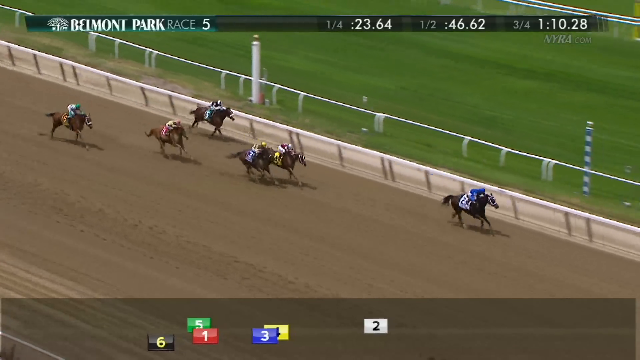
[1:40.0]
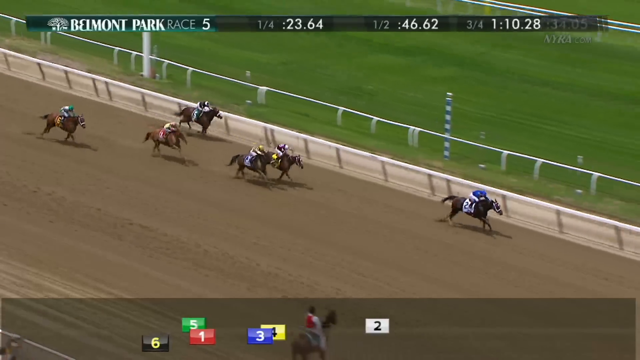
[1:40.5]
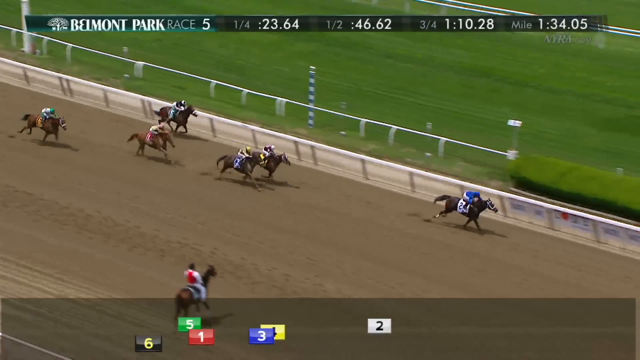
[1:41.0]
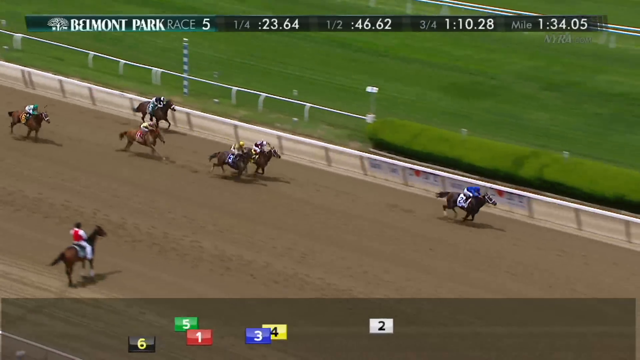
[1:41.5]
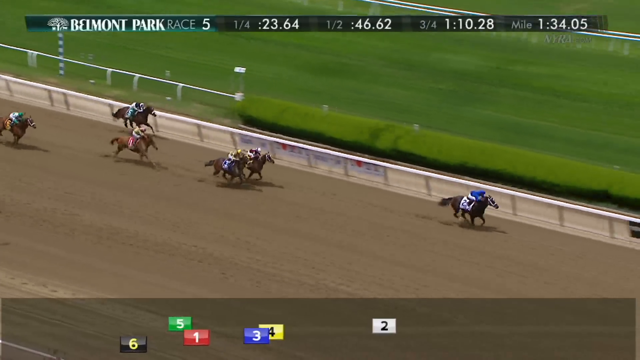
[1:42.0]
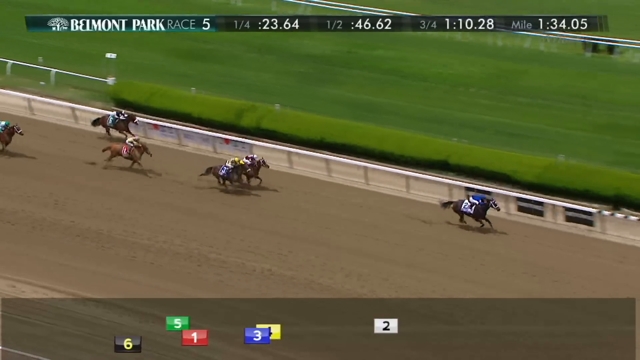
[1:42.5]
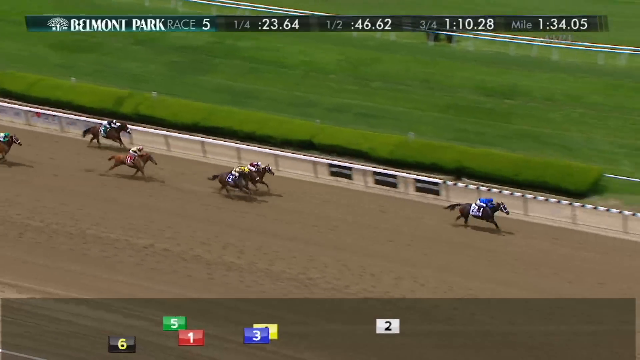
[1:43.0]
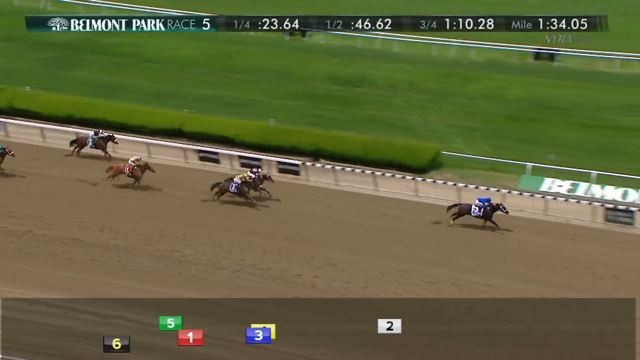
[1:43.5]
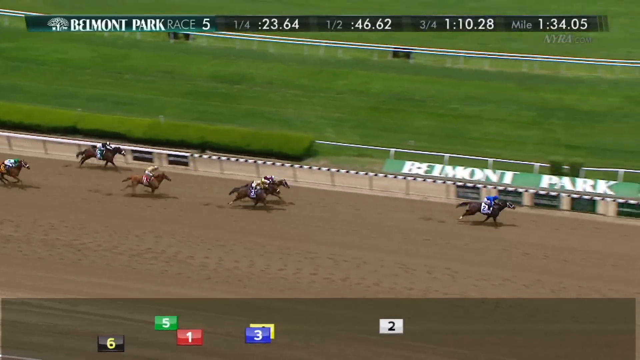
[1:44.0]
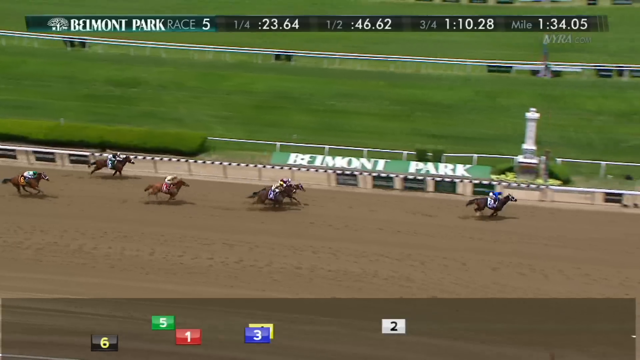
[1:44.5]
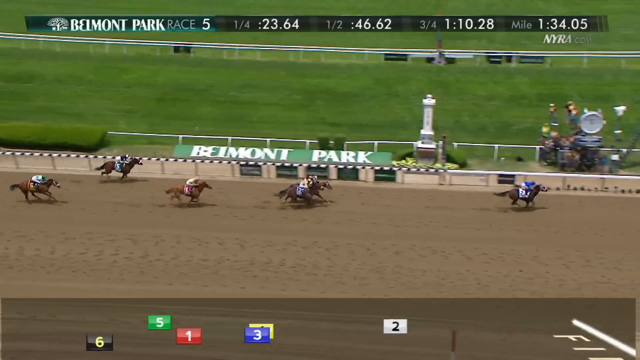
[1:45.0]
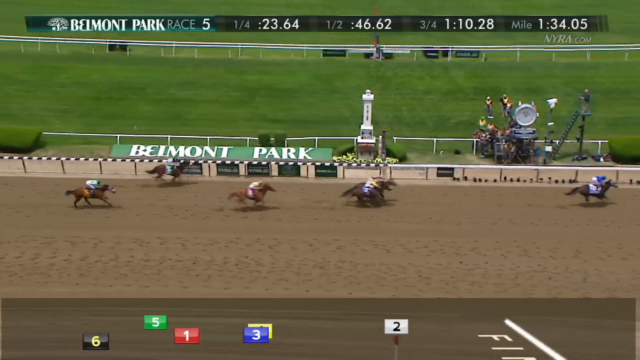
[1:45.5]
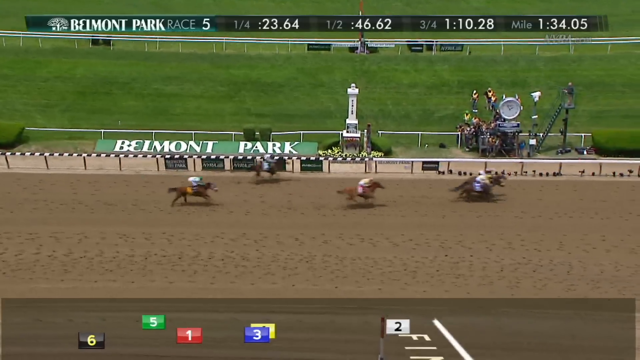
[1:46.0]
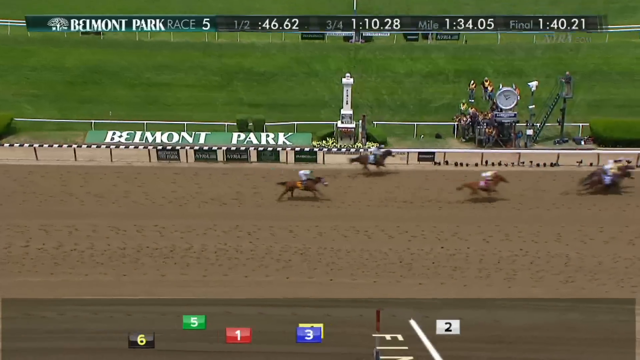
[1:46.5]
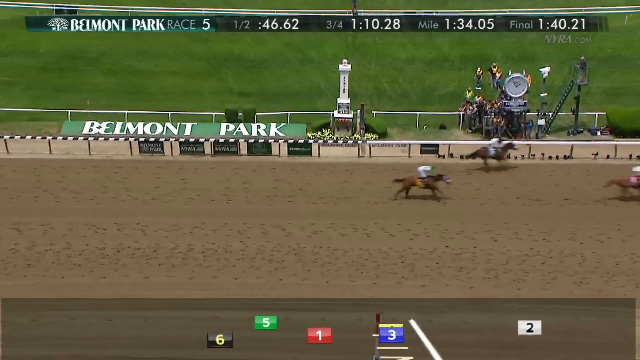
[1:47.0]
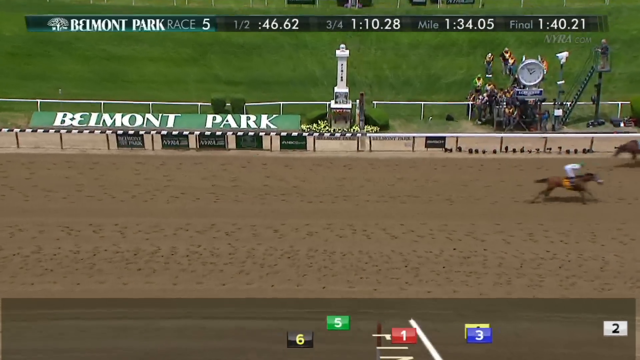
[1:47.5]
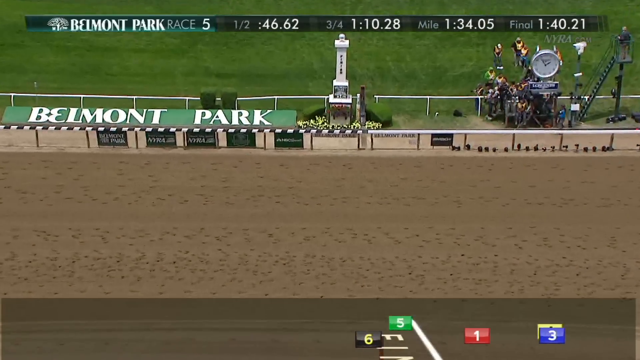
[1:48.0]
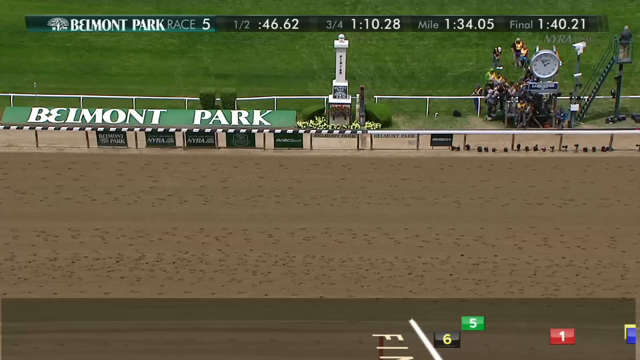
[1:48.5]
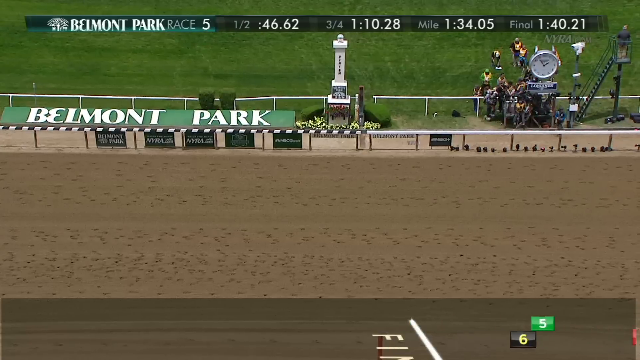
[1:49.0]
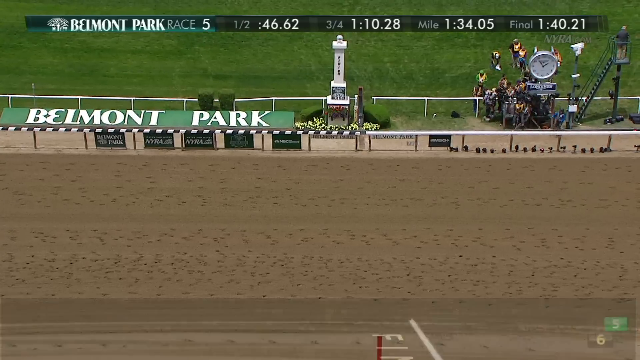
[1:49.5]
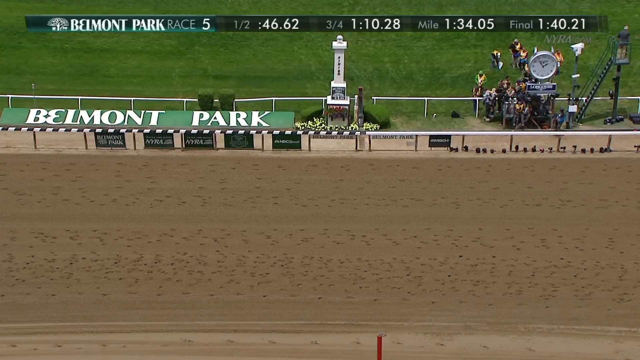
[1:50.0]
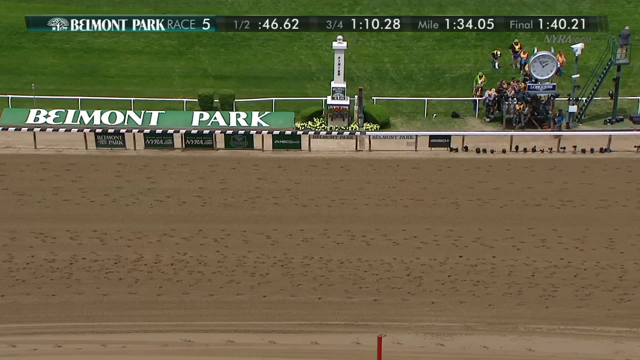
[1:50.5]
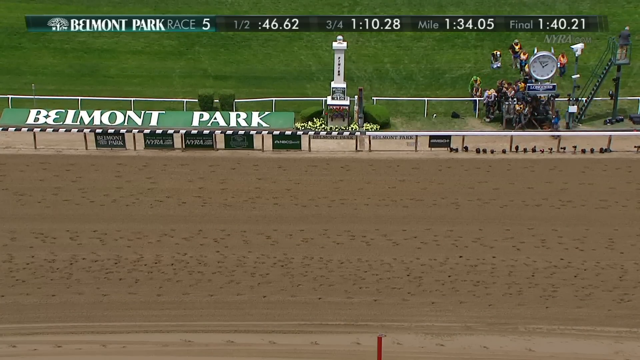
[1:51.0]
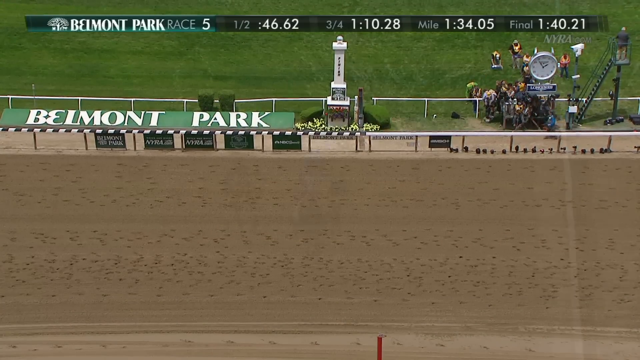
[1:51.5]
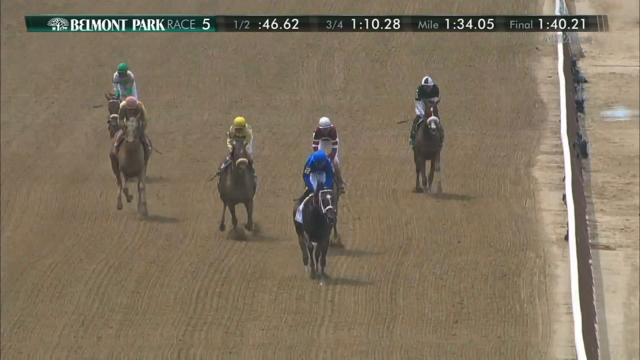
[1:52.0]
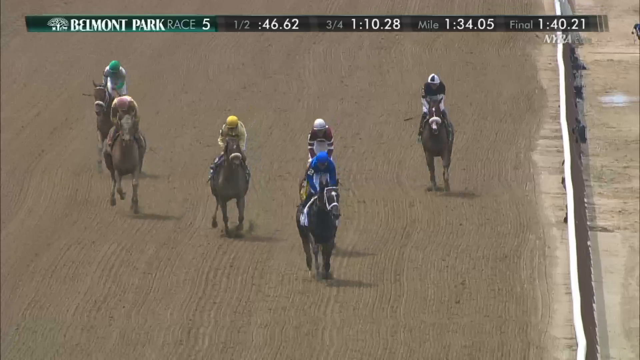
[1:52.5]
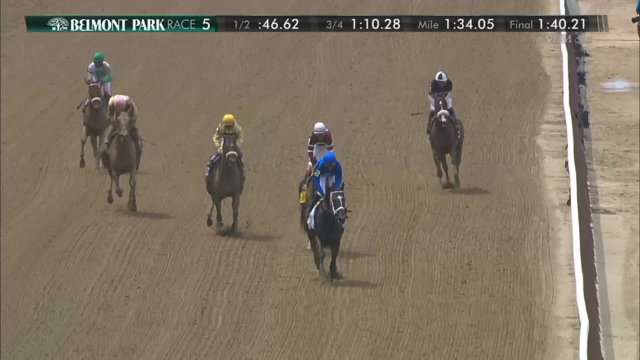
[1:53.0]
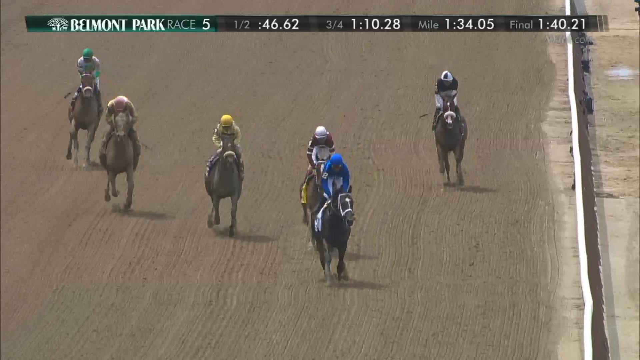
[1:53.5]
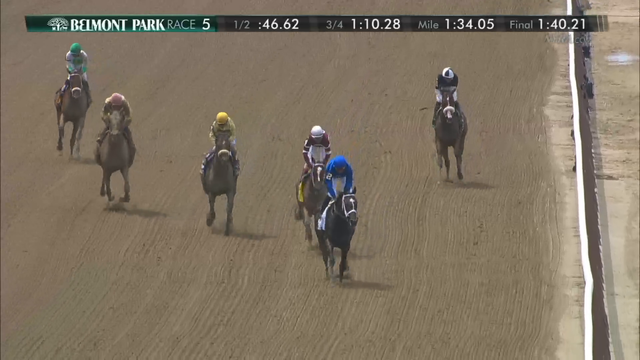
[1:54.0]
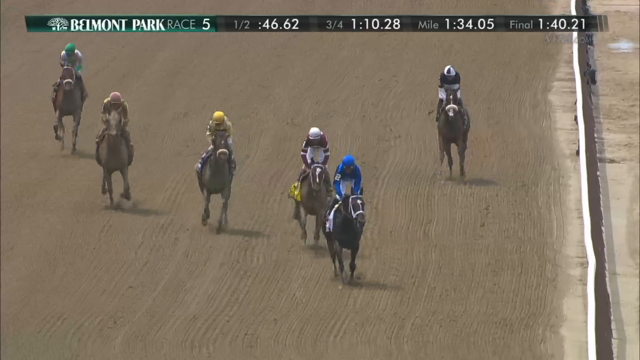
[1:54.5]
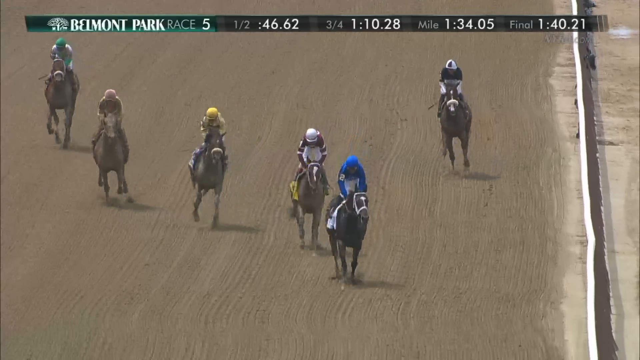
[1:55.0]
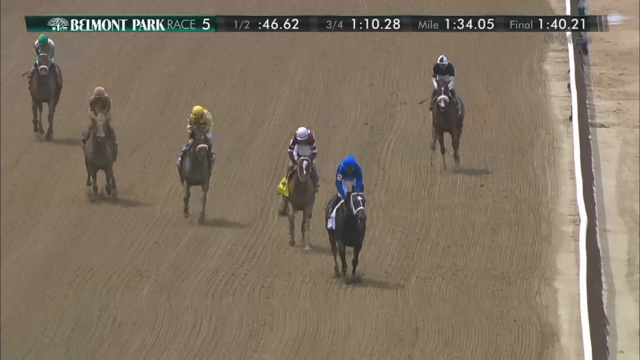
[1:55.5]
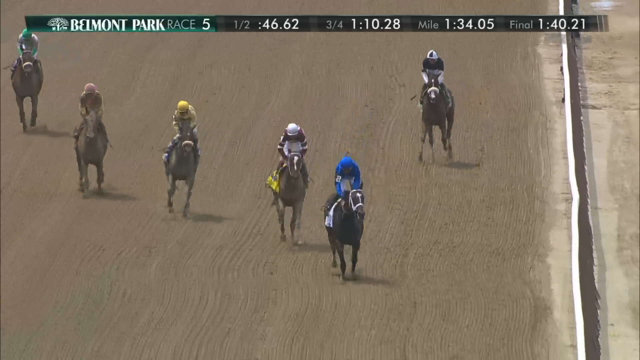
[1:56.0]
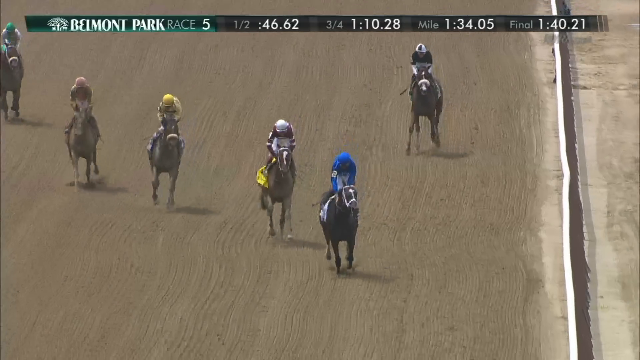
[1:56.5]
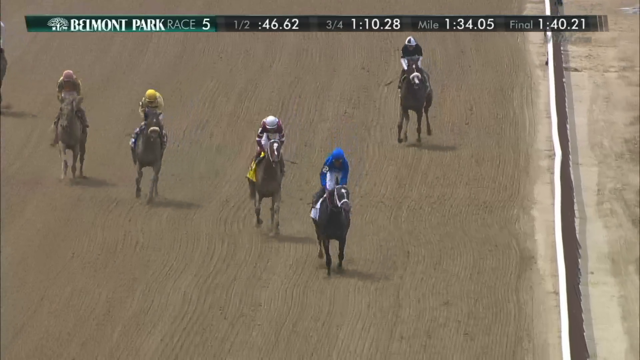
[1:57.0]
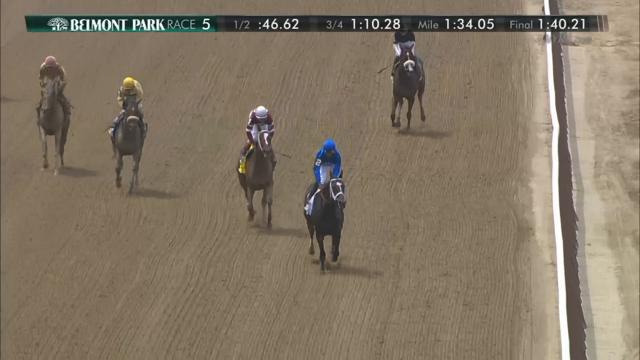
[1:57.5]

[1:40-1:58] In the last segment of the race, the horses, now spread out over 20 horse lengths, approach the finish line. Horse number two, Wedding Toast, is far ahead and is the clear winner. Text at the bottom of the screen shows the relative positions of the horses: number two, Wedding Toast, first, about six lengths ahead of number four; number three in third place, just half a length behind number four; number one in fourth place, several lengths behind; and number five in fifth place, a nose behind number one.